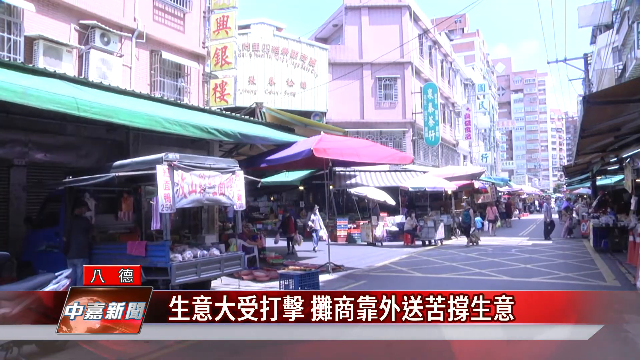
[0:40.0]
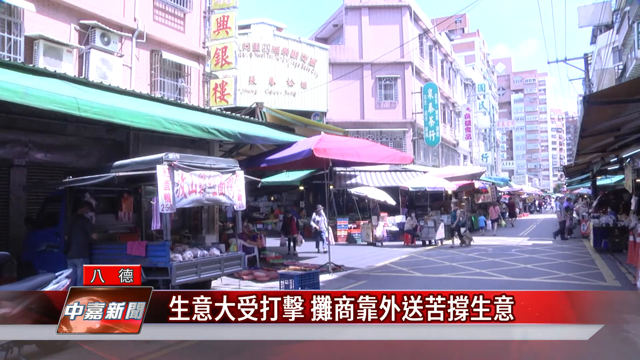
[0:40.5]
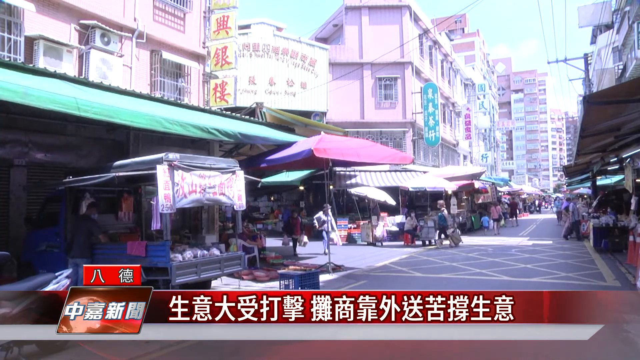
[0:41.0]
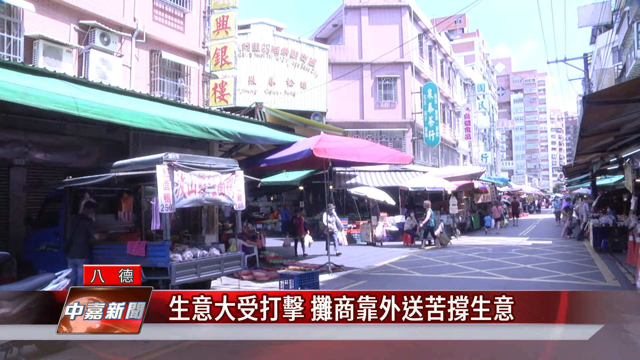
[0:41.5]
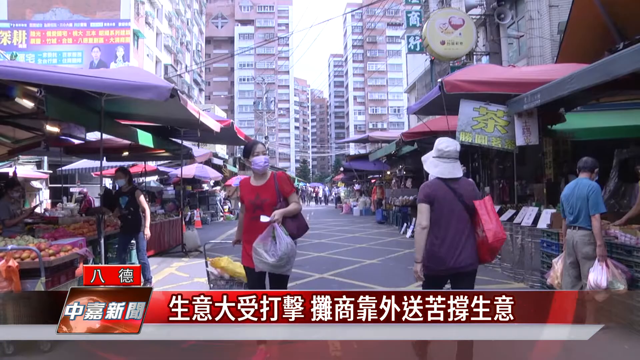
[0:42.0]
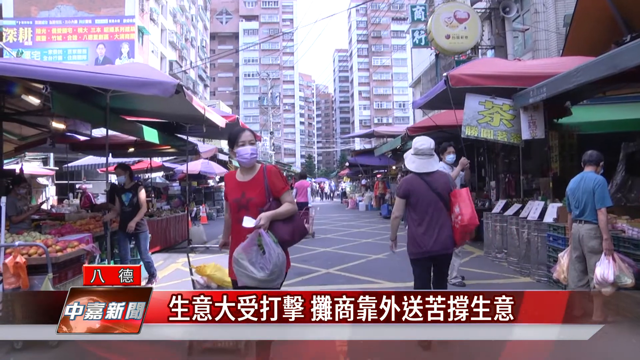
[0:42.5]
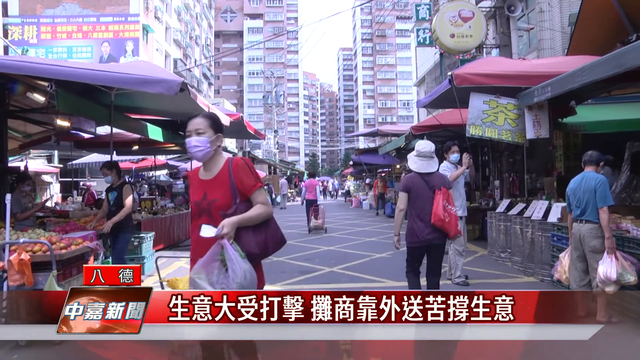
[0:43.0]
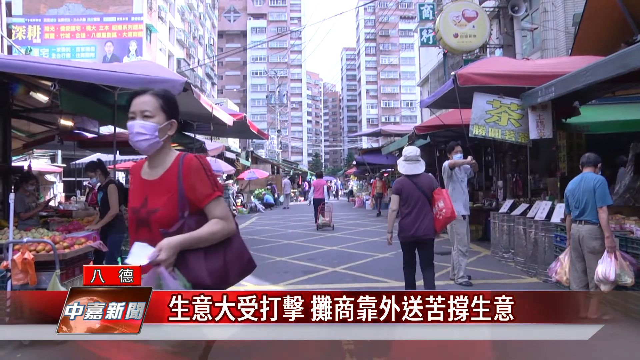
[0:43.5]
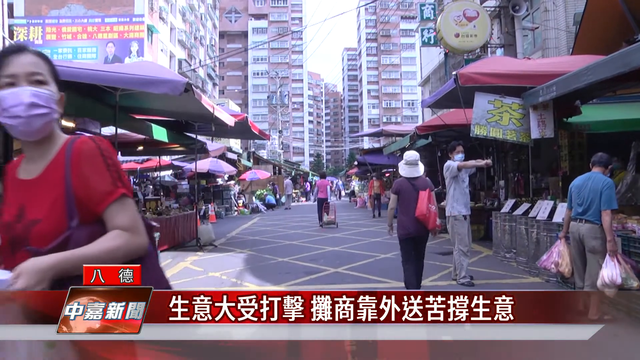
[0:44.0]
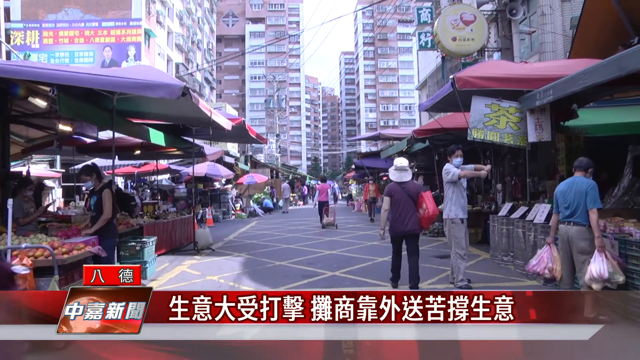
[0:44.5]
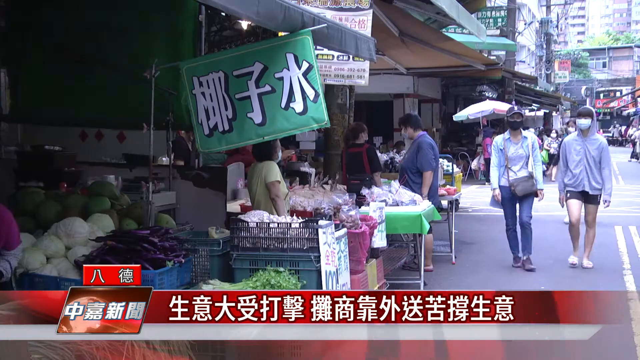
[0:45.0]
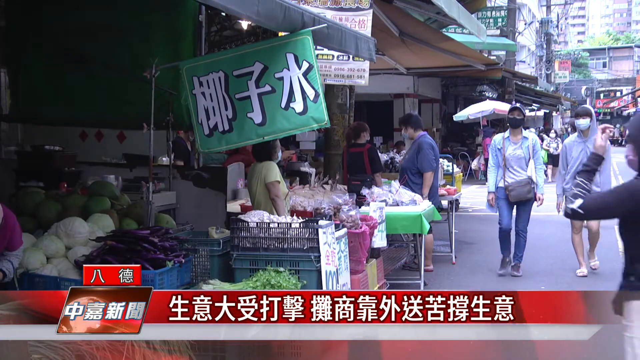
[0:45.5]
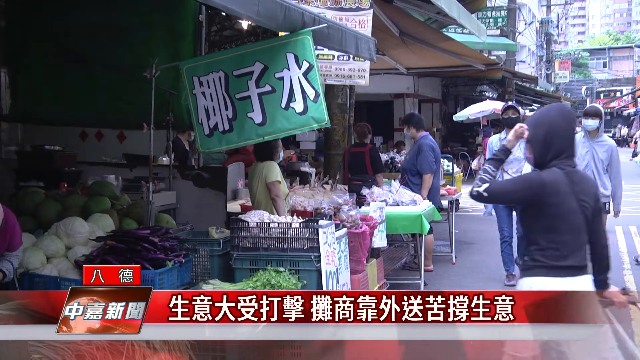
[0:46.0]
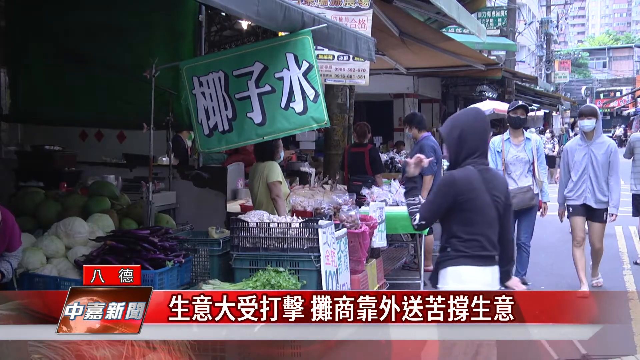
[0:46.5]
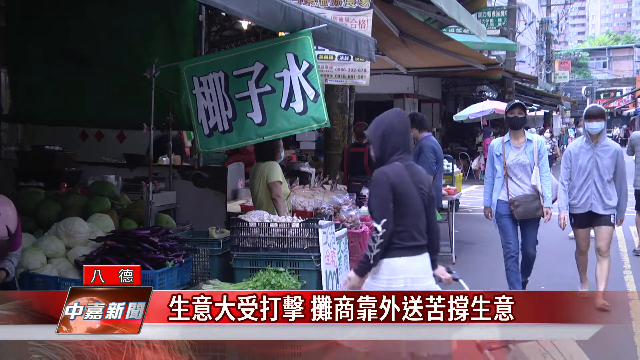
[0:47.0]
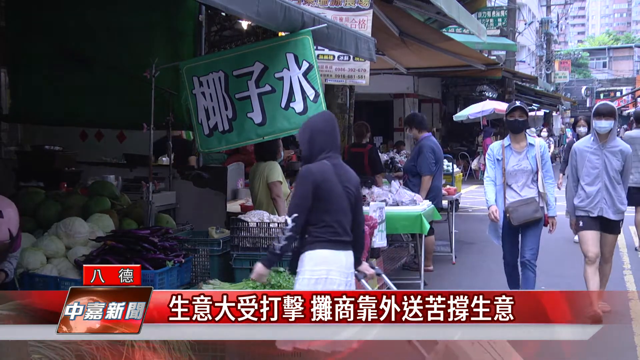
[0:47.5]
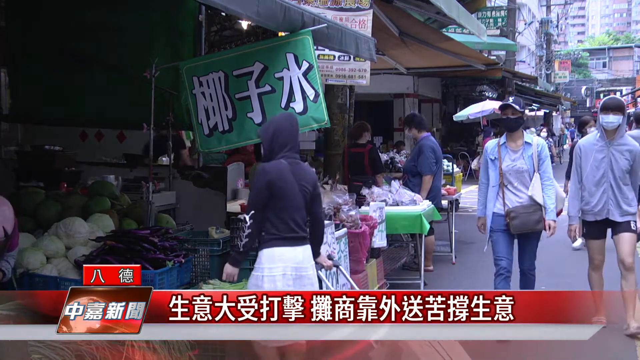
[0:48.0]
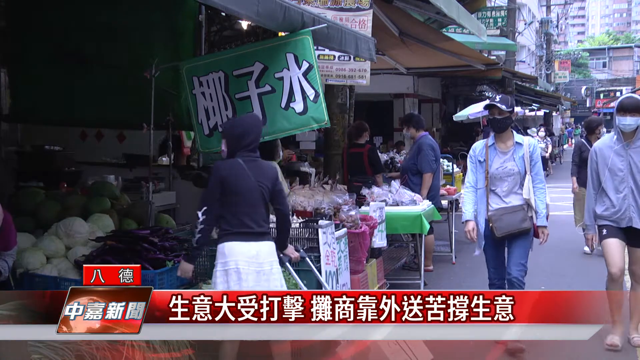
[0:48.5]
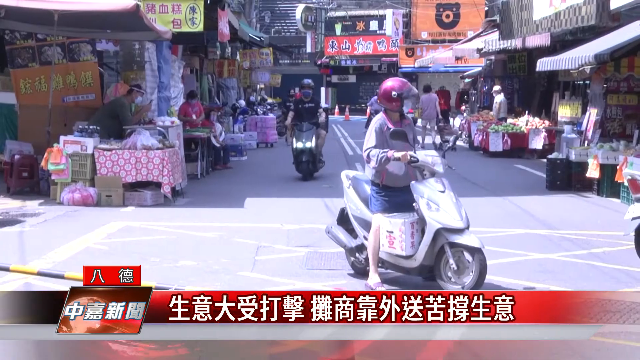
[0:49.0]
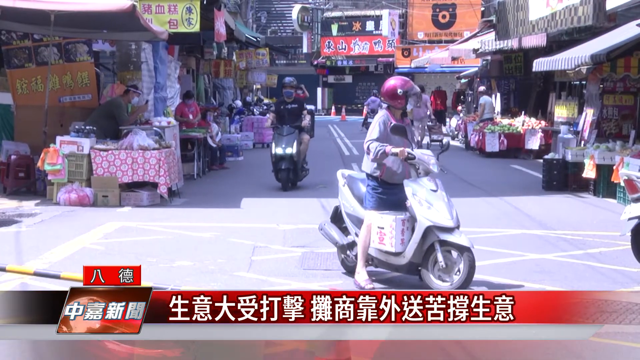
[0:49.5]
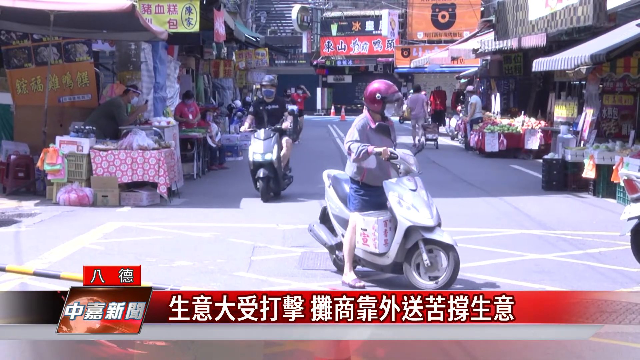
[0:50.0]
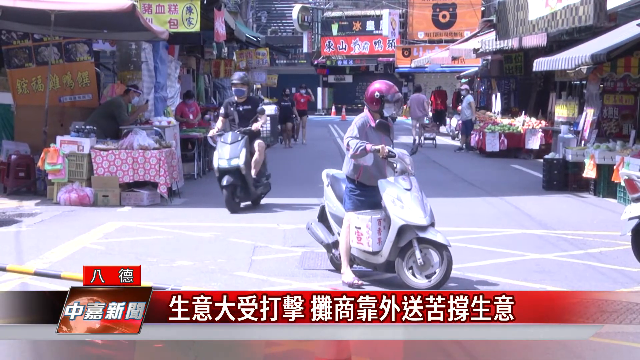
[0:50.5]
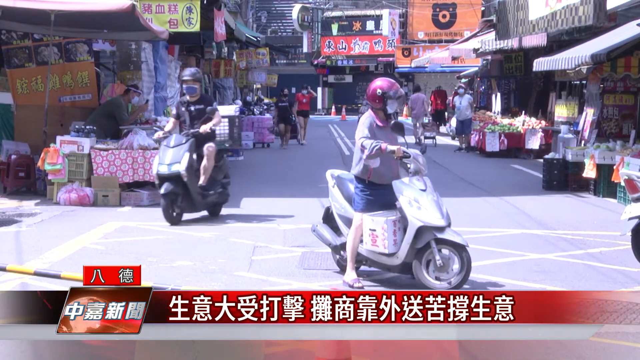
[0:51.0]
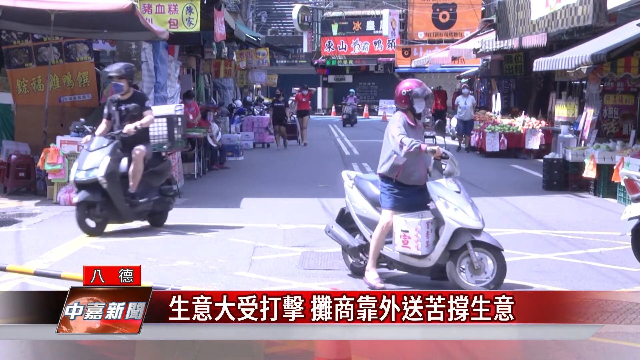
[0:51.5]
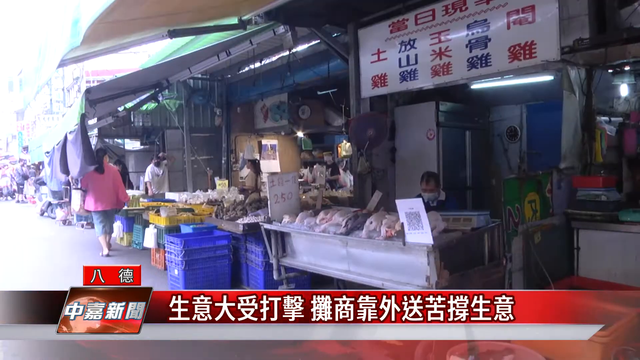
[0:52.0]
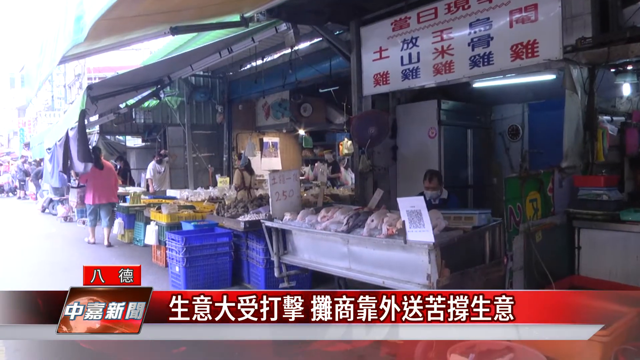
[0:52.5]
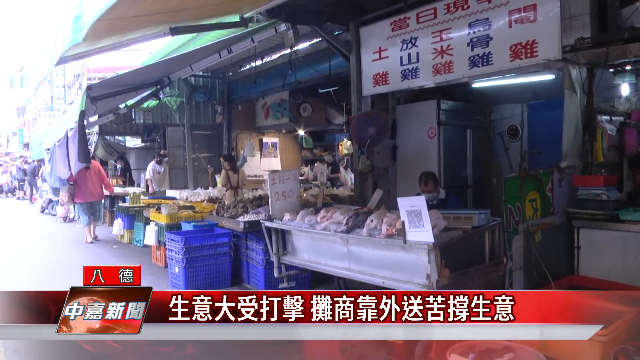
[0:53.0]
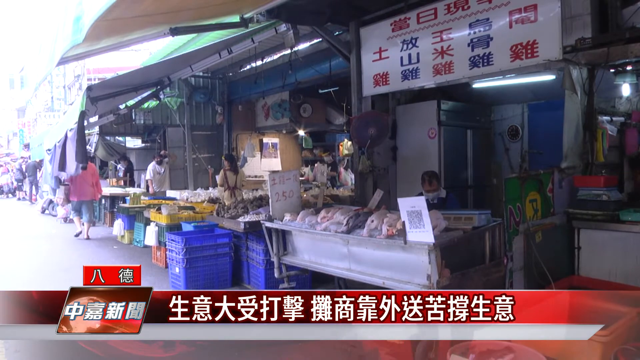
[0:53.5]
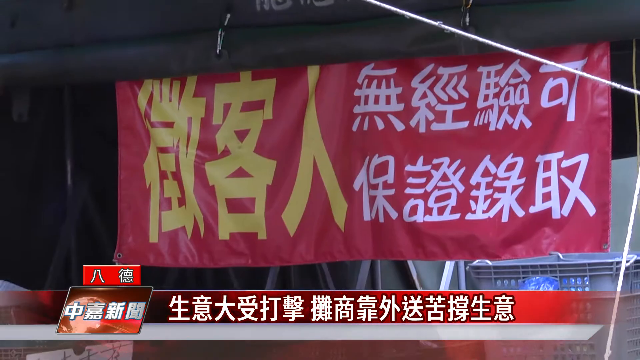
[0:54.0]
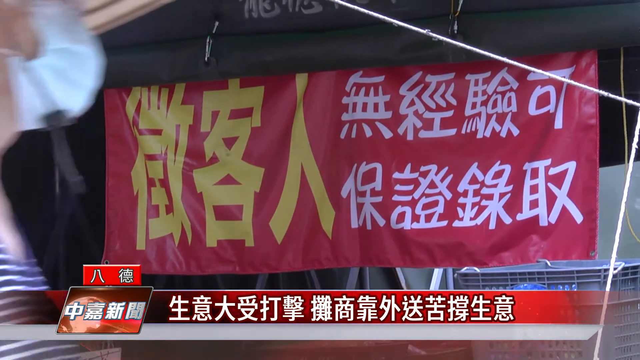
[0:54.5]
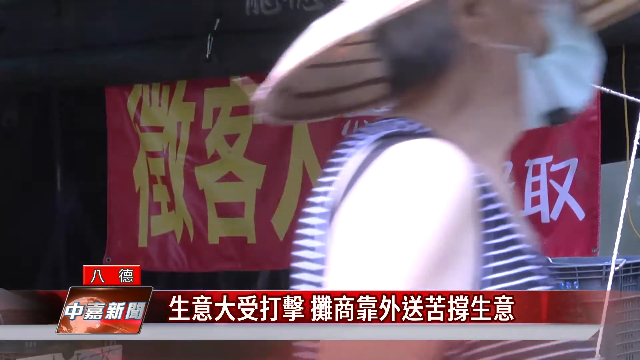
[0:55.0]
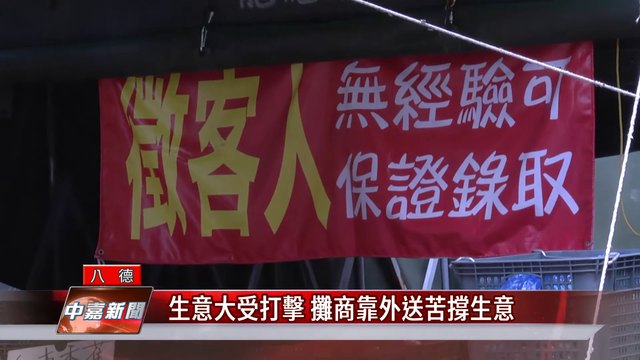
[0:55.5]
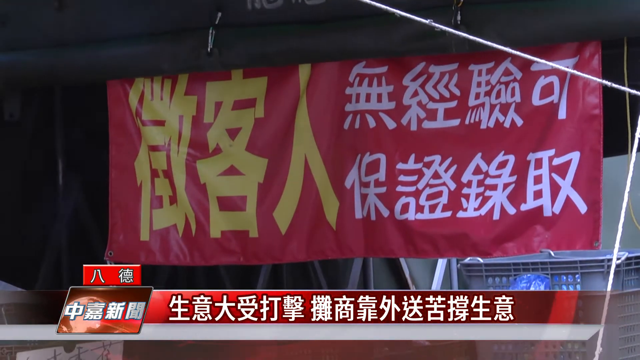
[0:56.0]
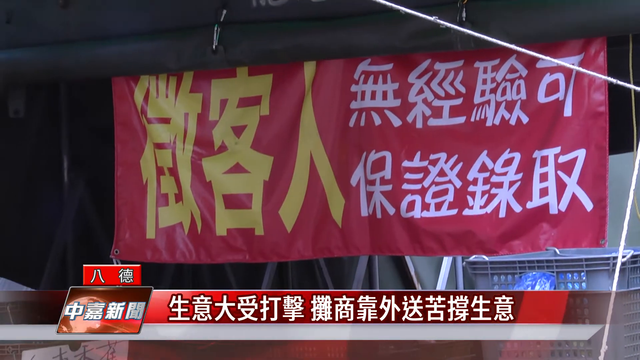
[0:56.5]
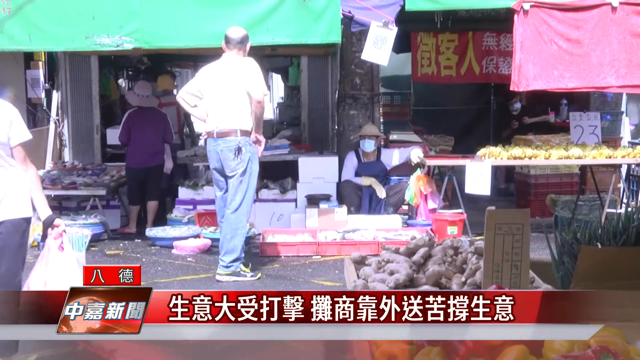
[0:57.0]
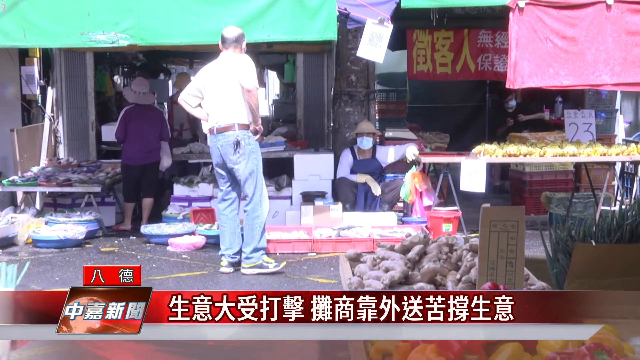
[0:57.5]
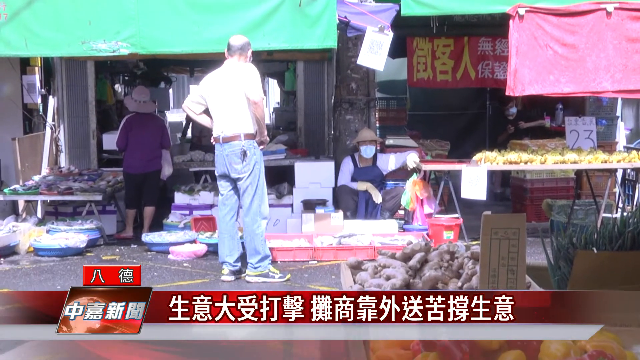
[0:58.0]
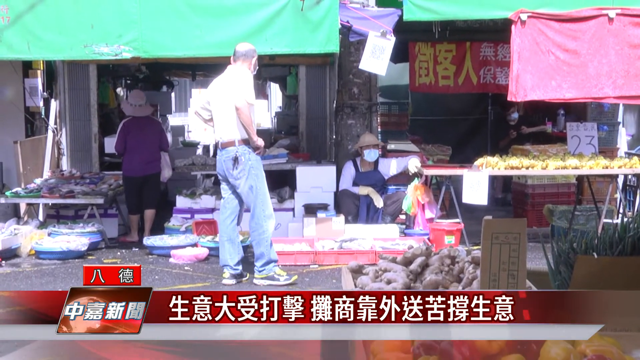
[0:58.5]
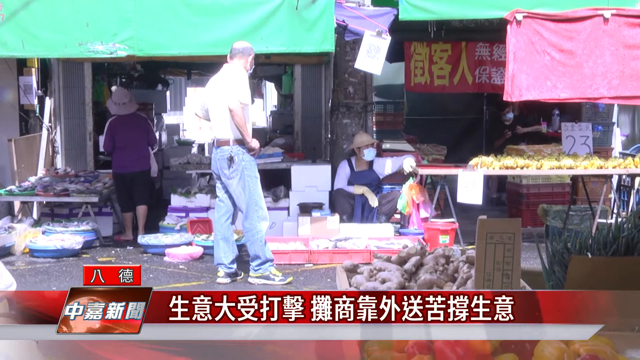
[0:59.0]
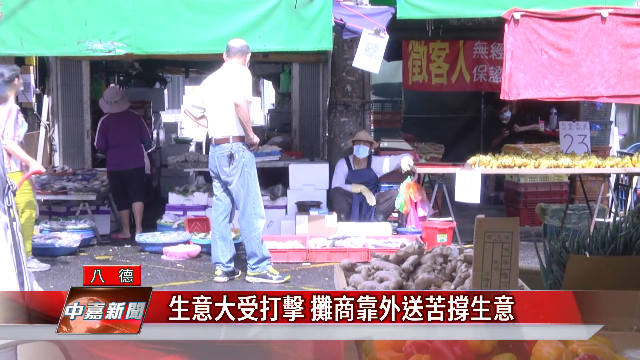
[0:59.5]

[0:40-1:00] B-roll footage shows what looks like an open-air market. People walk by wearing masks, with many high-rise buildings in the background and a billboard visible. There are fruit stalls and vegetable stalls. A red banner with white text along the bottom looks like a news banner, in some sort of Asian language. People ride mopeds and scooters, some wearing helmets. Business signs are visible, including a giant red banner with gold and white writing in some sort of Asian language. People mill about, and almost everyone appears to be wearing a mask; the footage was possibly taken during COVID. It is a daytime shot of people shopping, dressed in a wide variety of clothing: some in shorts, some in long sleeves, some in short sleeves. A variety of wares is for sale, and at one point there is what looks almost like fish for sale. People check out the merchandise as they walk by. The area looks like a crowded city area.